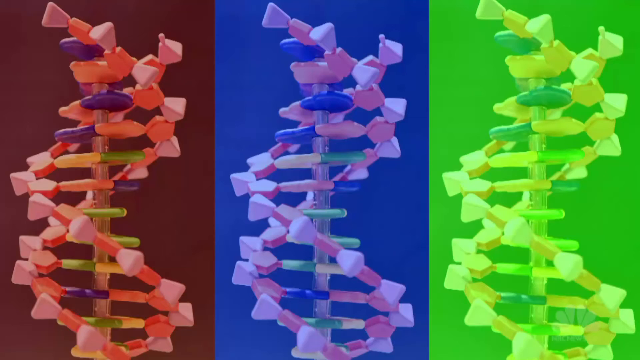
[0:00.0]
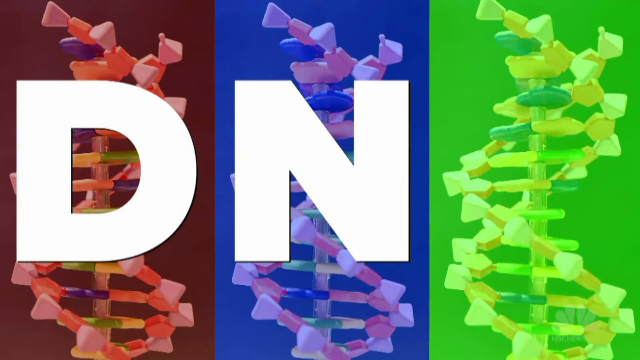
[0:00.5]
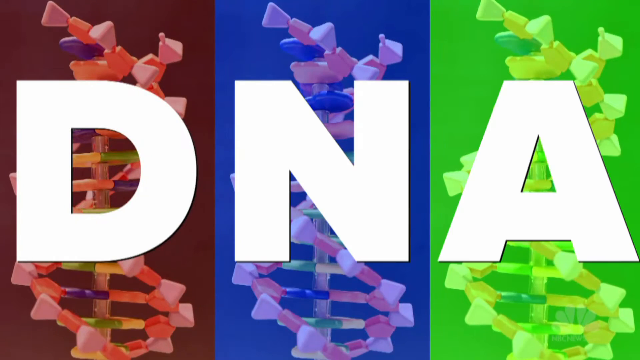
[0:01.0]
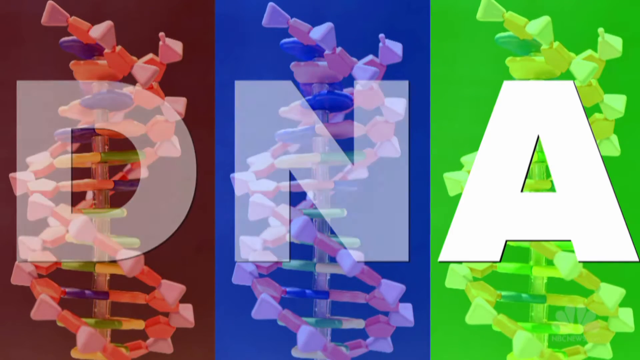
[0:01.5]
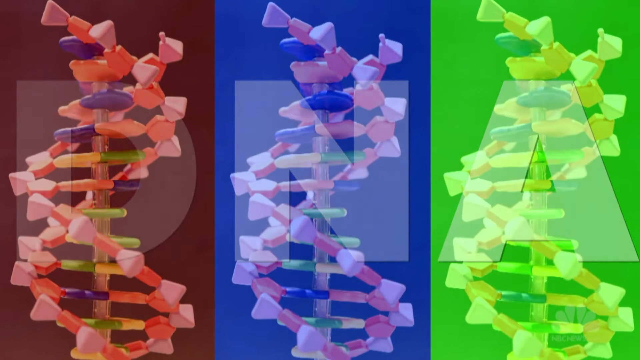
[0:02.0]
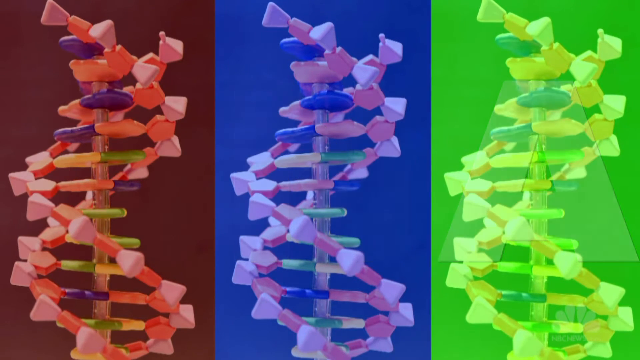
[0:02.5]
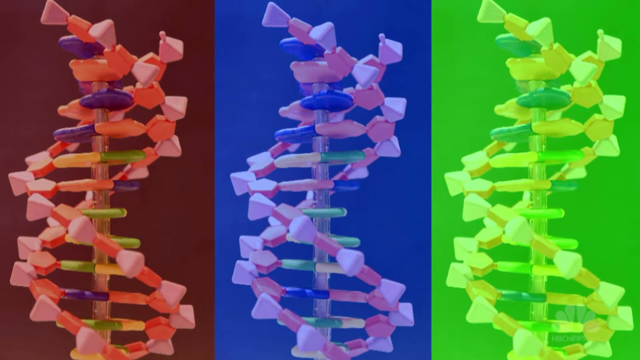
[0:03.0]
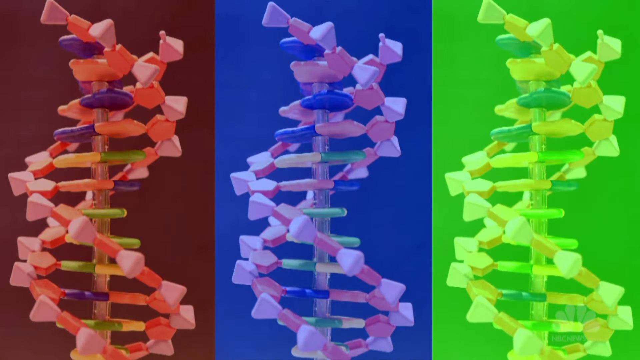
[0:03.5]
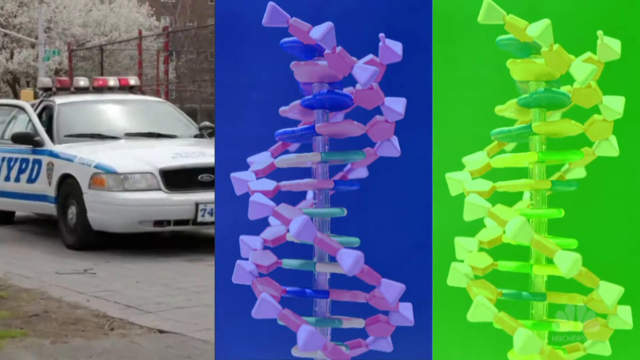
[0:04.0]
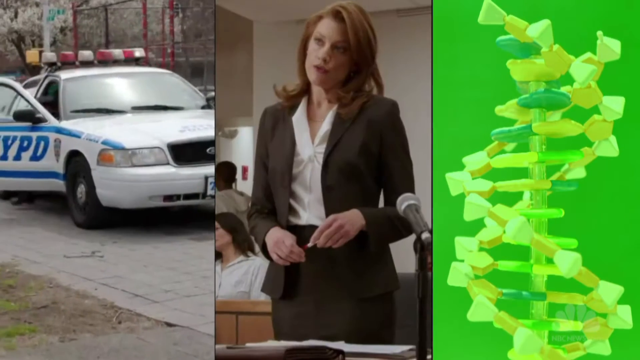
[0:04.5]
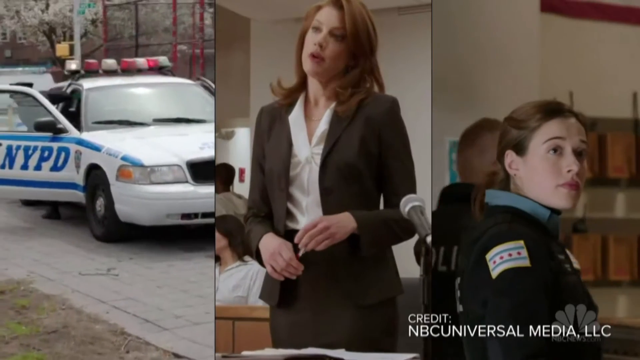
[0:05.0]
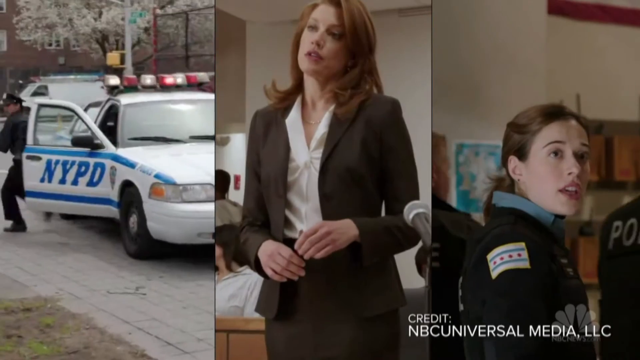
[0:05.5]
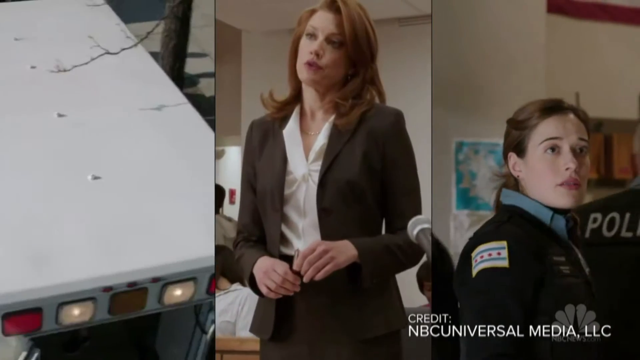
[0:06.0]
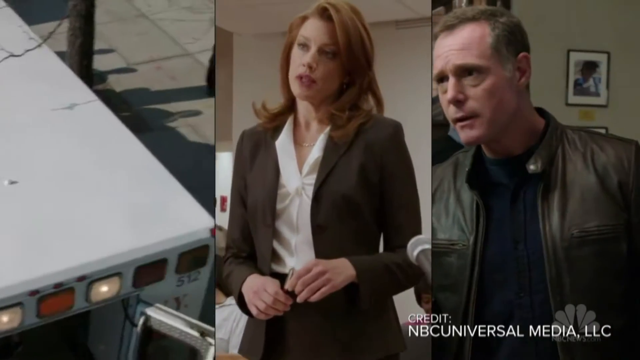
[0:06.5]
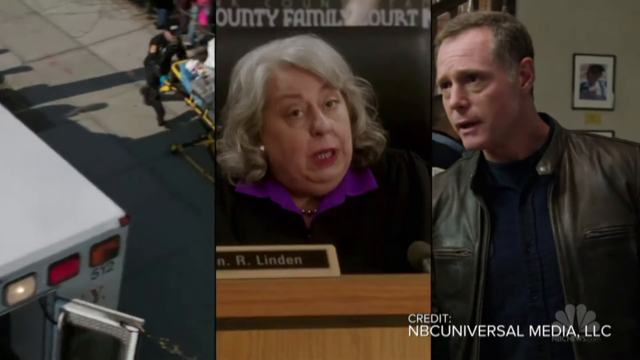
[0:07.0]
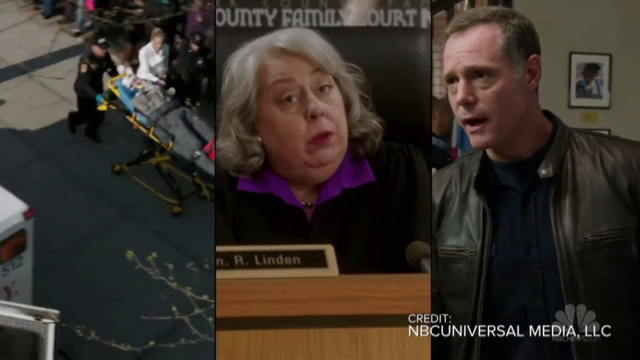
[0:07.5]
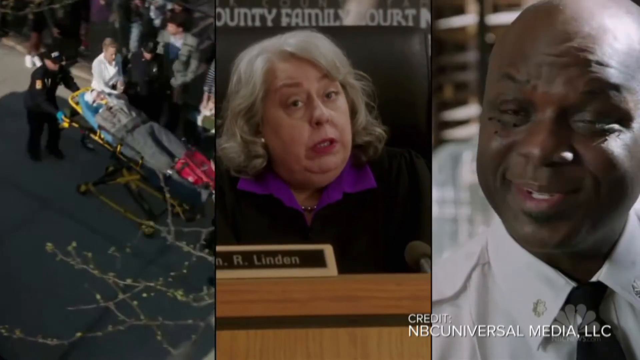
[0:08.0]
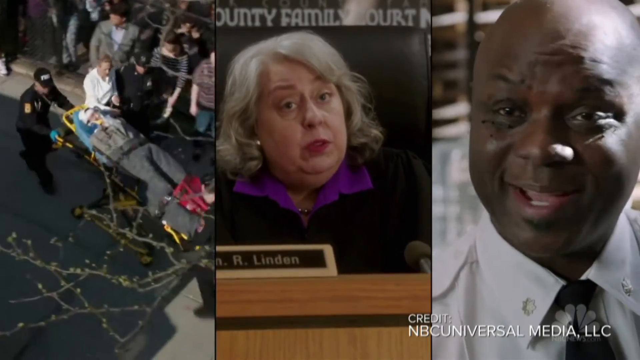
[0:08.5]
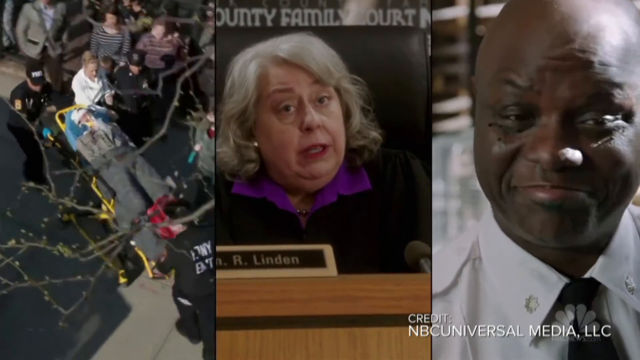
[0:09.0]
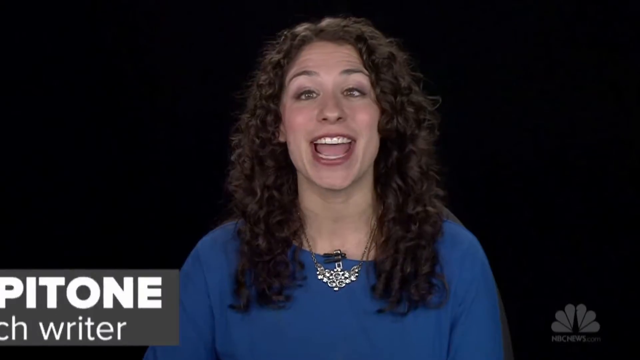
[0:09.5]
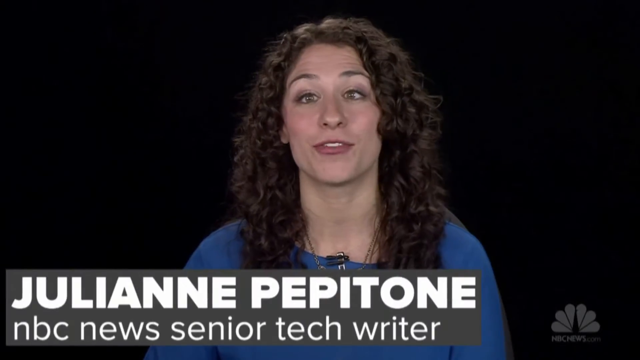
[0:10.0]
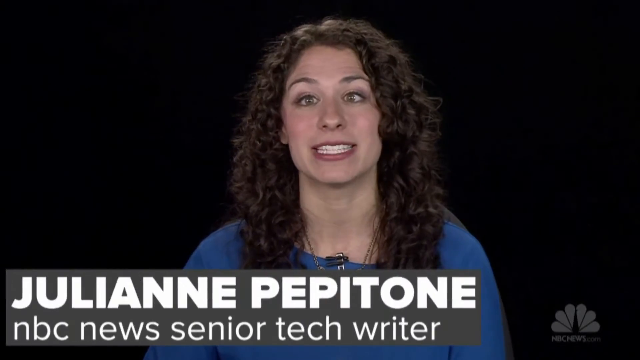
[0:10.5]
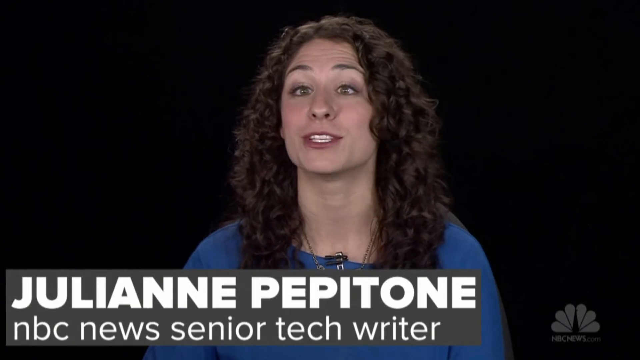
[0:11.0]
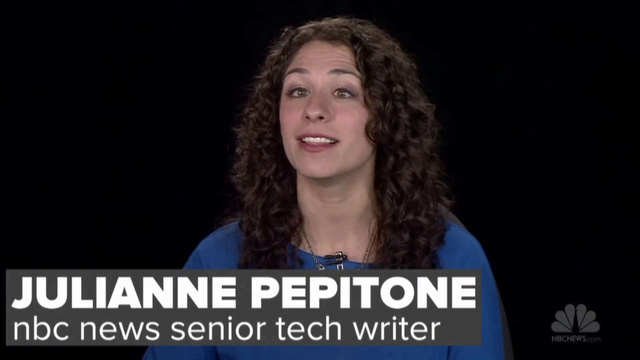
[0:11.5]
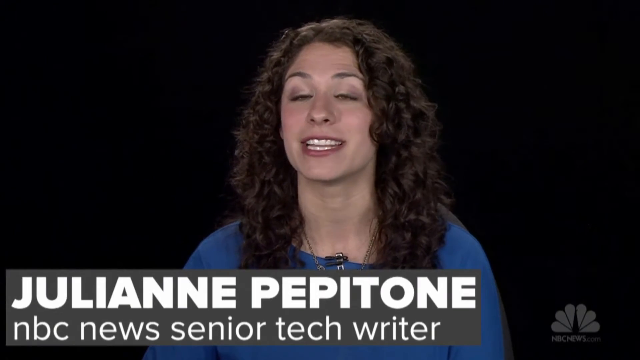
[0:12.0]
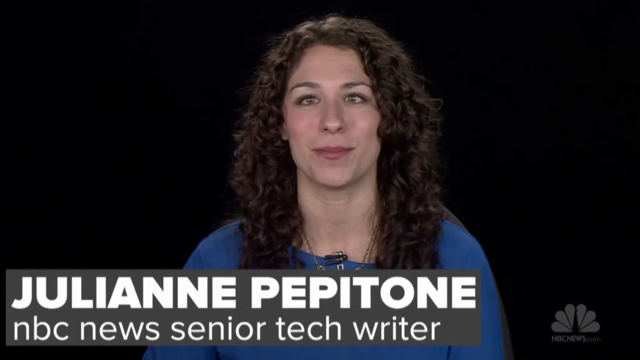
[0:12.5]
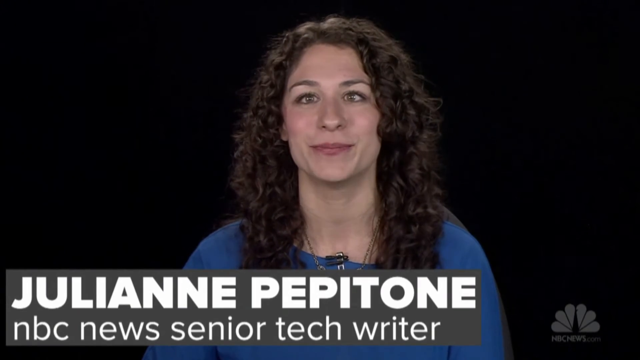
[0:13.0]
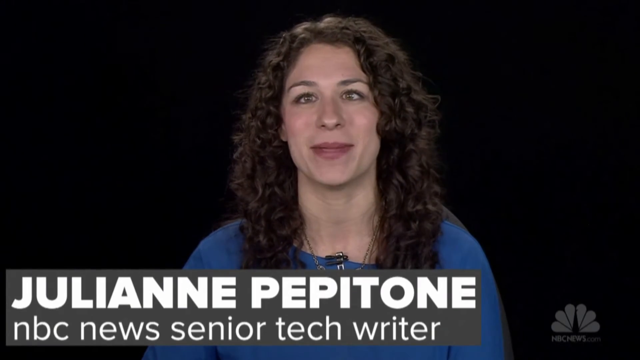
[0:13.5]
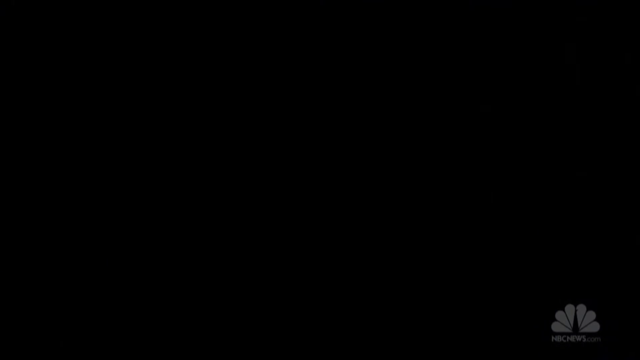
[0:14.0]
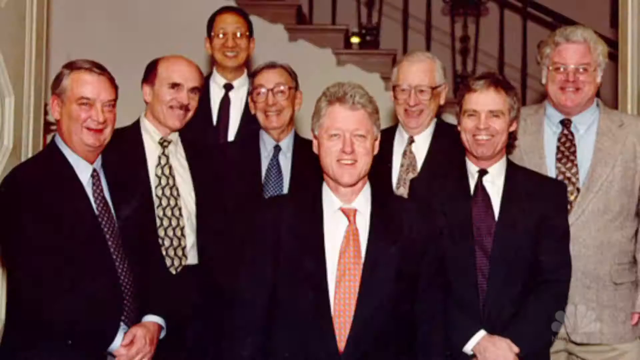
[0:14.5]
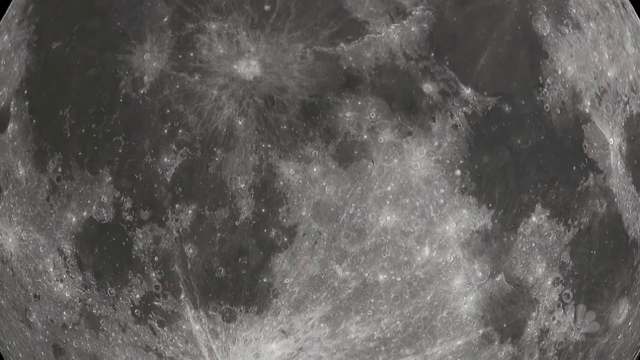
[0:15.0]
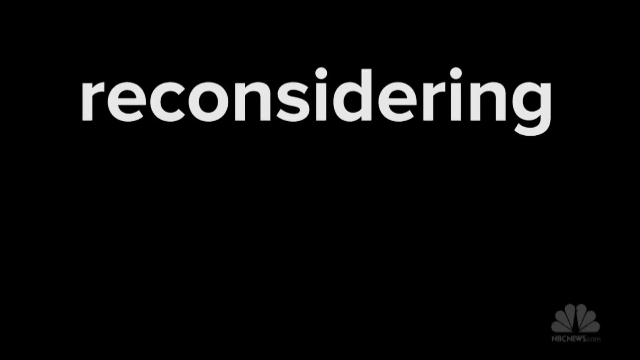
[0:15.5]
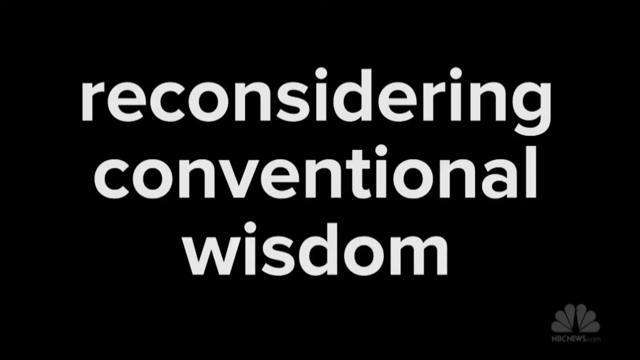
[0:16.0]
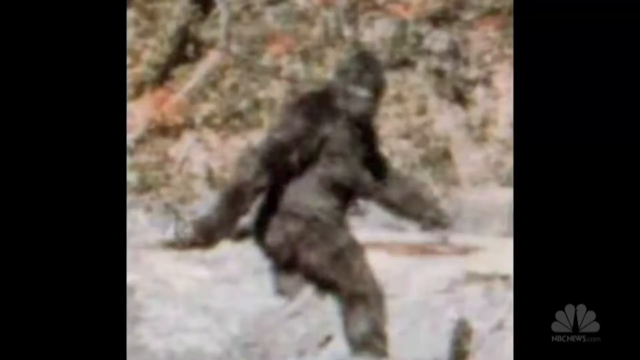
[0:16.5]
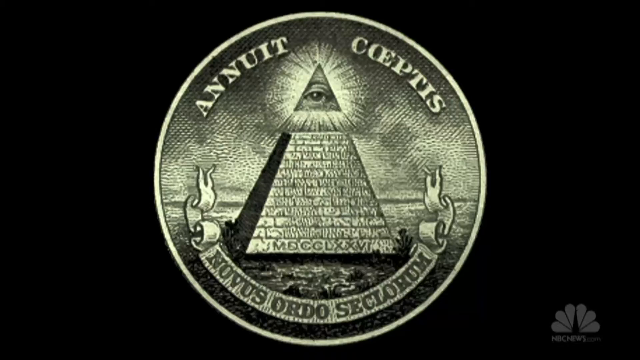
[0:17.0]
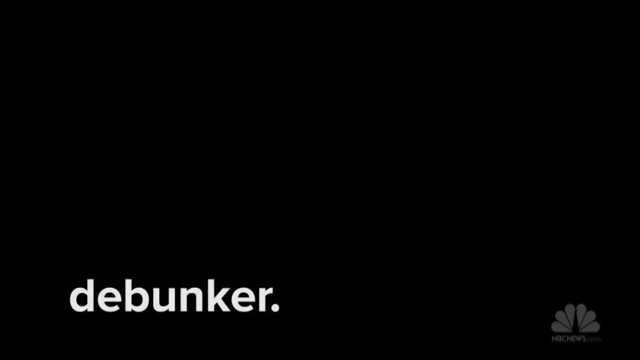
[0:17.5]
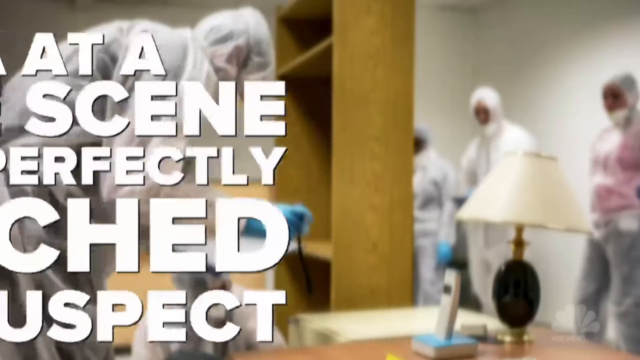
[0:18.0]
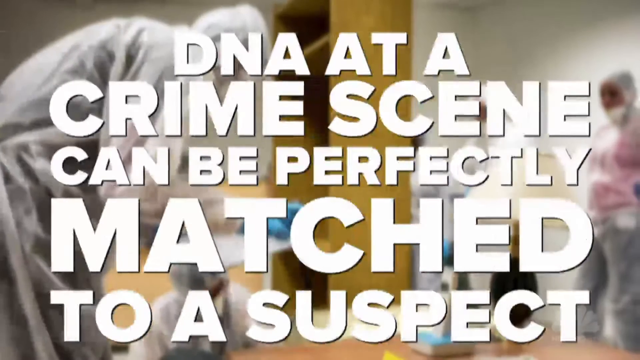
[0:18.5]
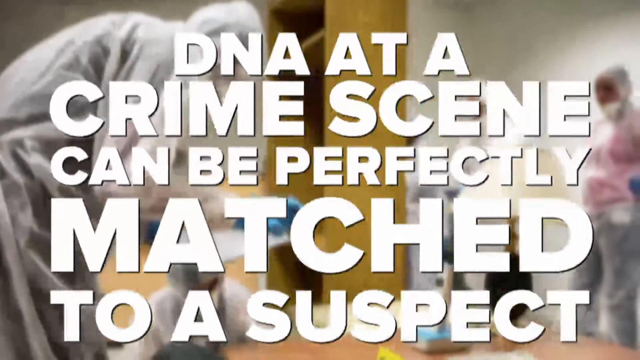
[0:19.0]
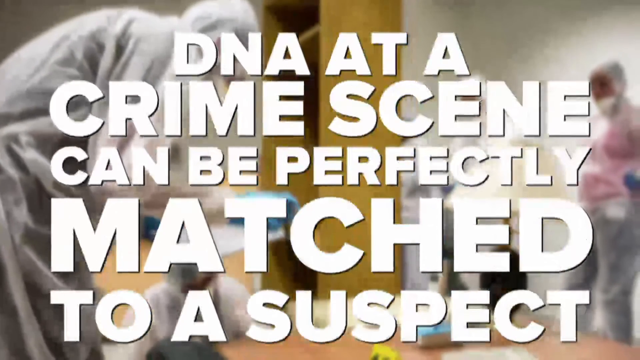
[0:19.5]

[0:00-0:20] The screen is split into three sections side by side. The first is dark red with a DNA strand, and a big white letter D is drawn in it. To the right of that is a blue screen with a blue strand of DNA that is twisting, and in the middle of it is a large white letter N. To the right of that is a green screen, also with a DNA strand twisting around, and a large white letter A. The video then cuts to three other screens. In the first, there is a white police car whose passenger-side door is open, and on the door it says "NYPD". The screen to the right shows a woman with long brown hair wearing a white shirt and a black suit, standing up, and to the right of that is a video of a woman in a police uniform with brown hair pulled back in a ponytail. These videos keep changing. Then the video shows a woman sitting in front of a black background. She has long black hair, her left eye is crossed, and she wears a long-sleeved blue shirt. Along the bottom of the screen it says "Julian Pepitone, NBC News Senior Tech Writer". A series of different screens keeps flashing until it ends on a final screen that says "DNA at a crime scene can be perfectly matched to a suspect".